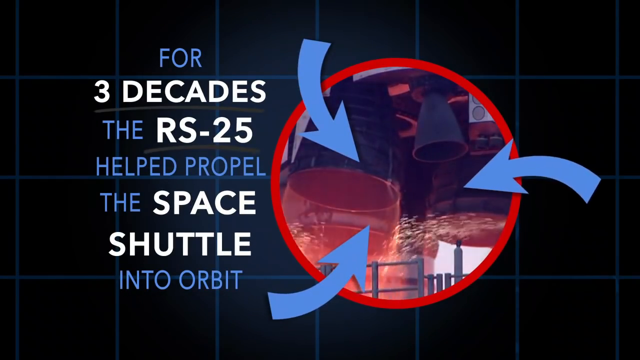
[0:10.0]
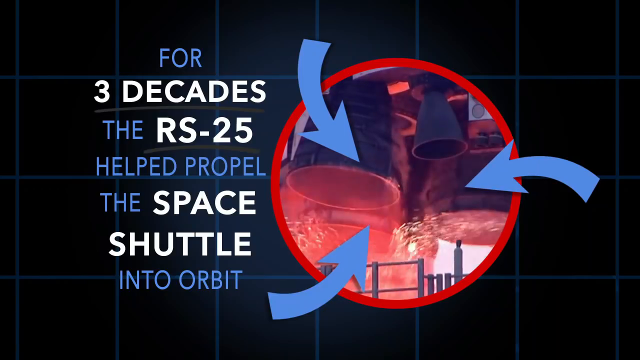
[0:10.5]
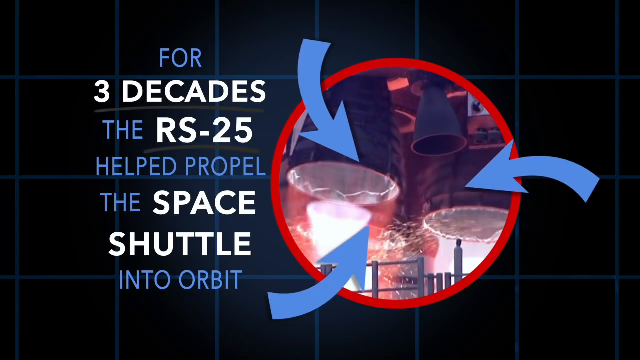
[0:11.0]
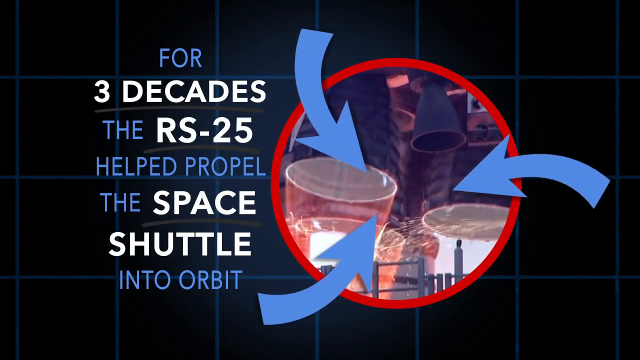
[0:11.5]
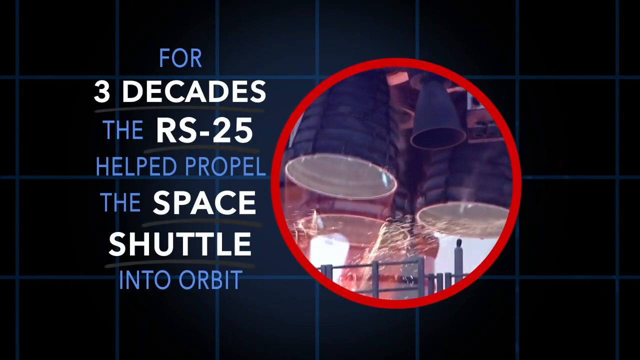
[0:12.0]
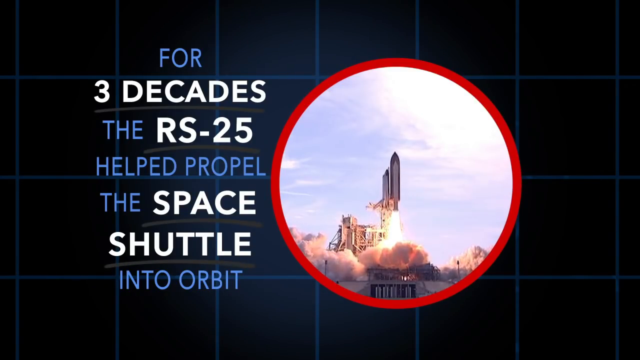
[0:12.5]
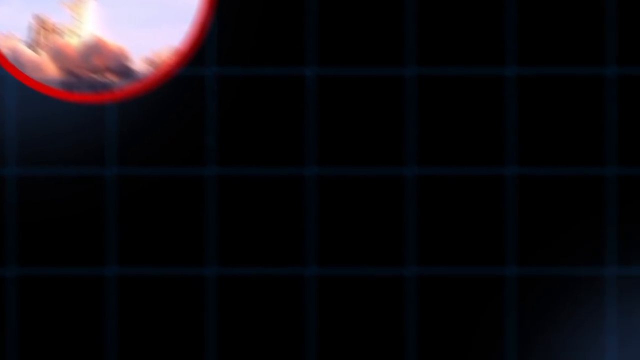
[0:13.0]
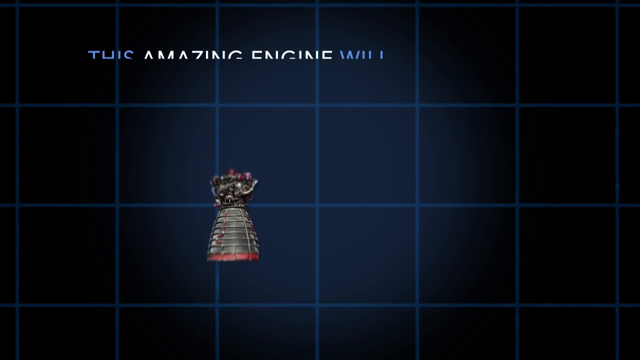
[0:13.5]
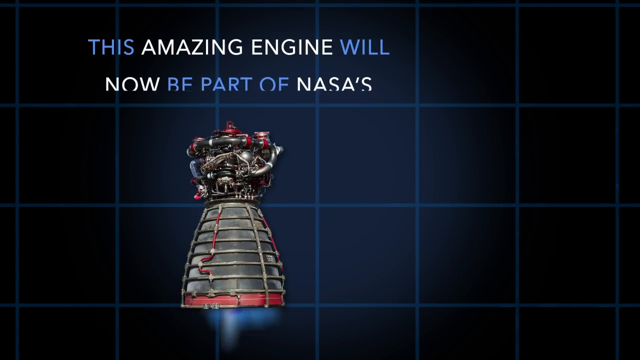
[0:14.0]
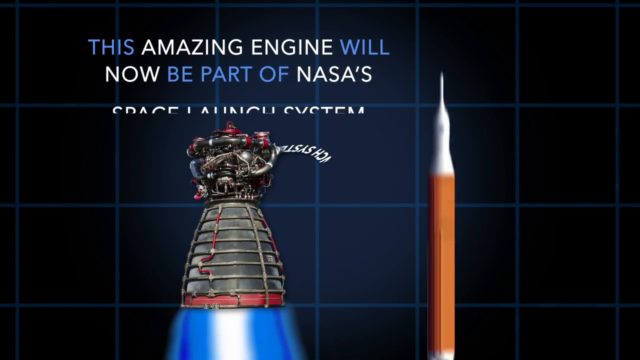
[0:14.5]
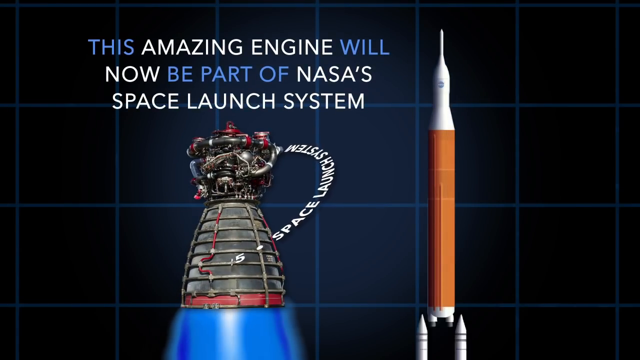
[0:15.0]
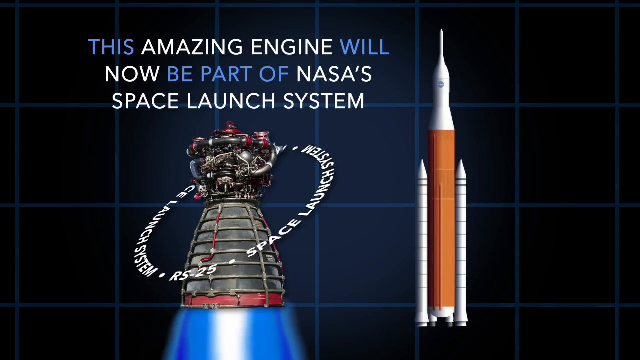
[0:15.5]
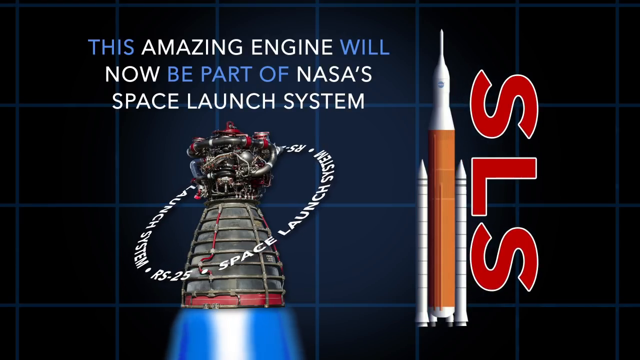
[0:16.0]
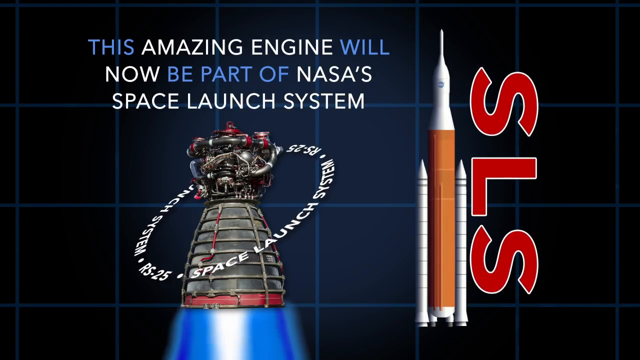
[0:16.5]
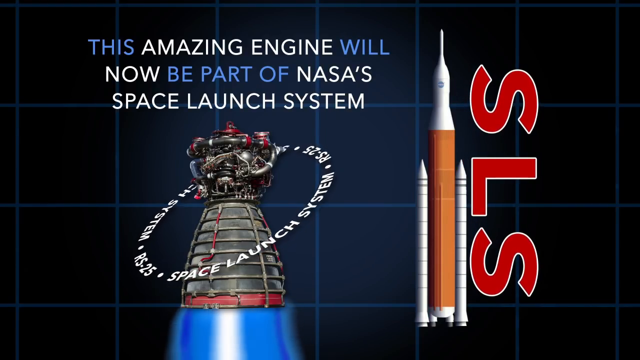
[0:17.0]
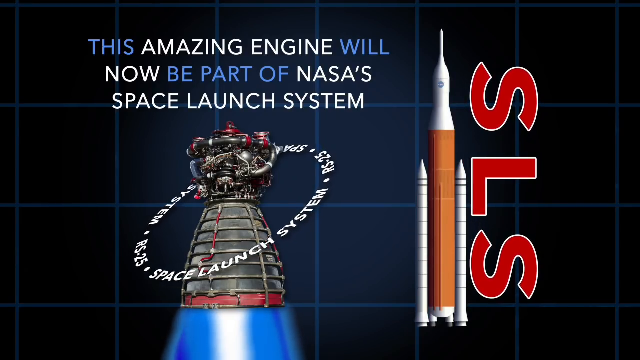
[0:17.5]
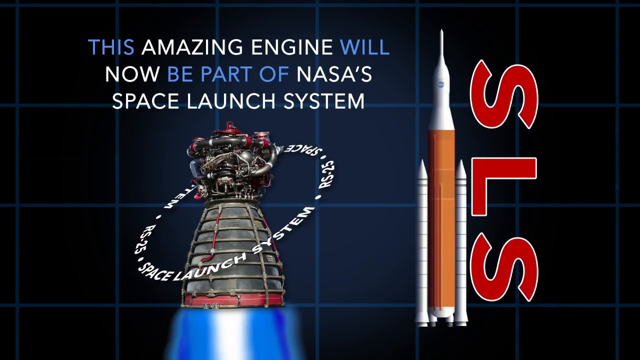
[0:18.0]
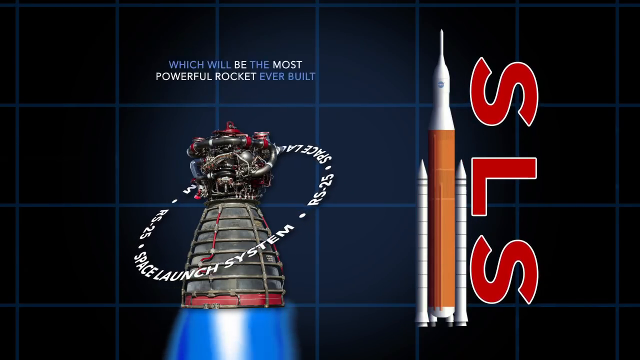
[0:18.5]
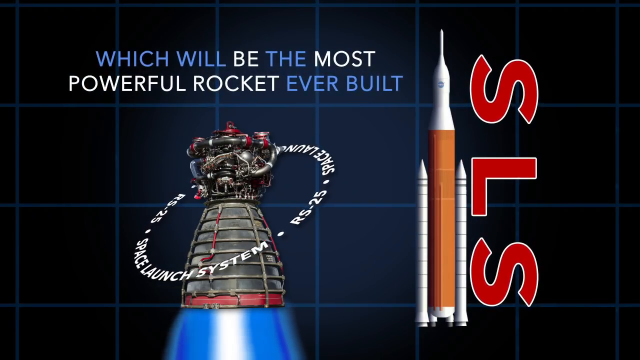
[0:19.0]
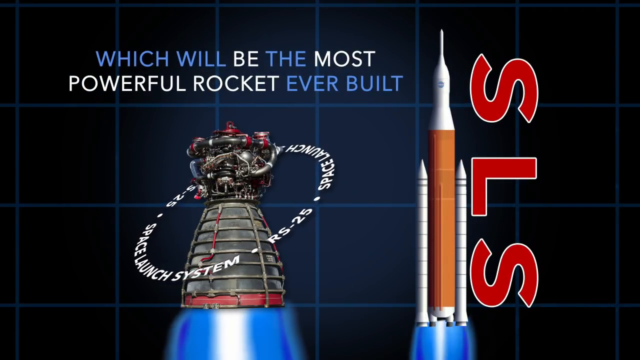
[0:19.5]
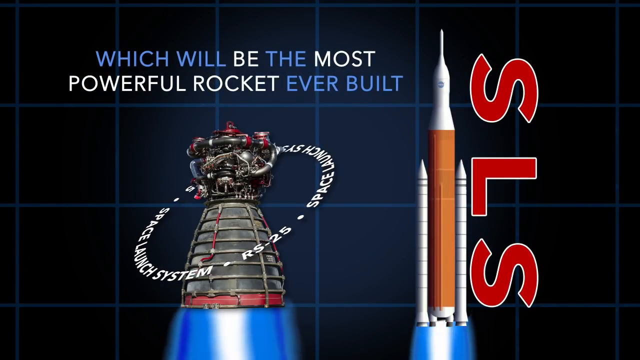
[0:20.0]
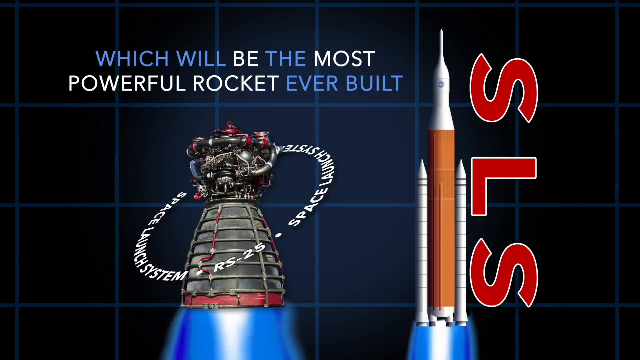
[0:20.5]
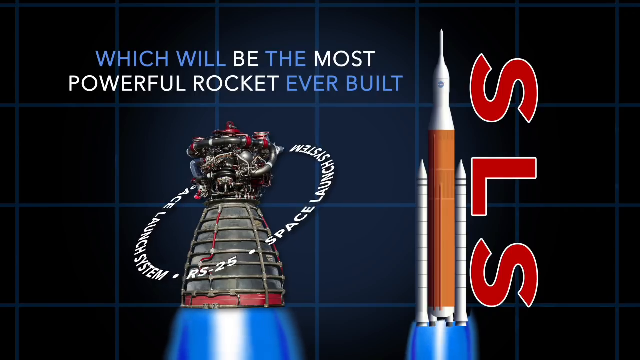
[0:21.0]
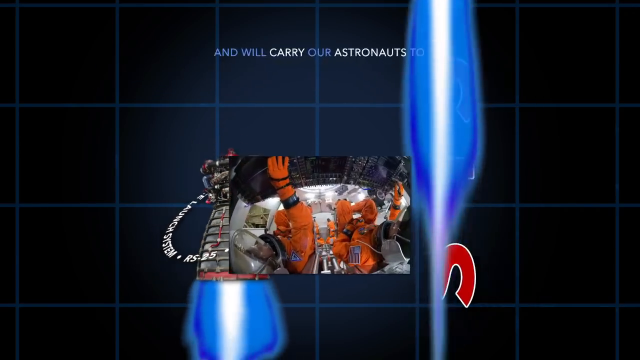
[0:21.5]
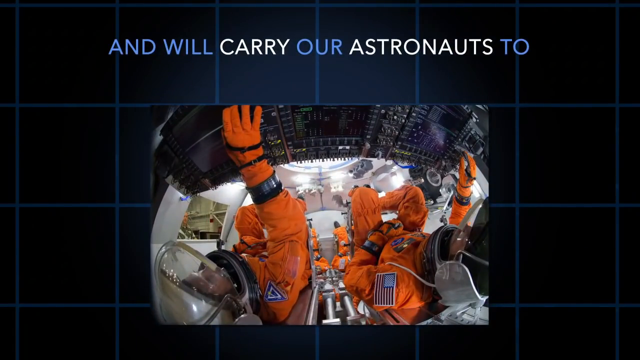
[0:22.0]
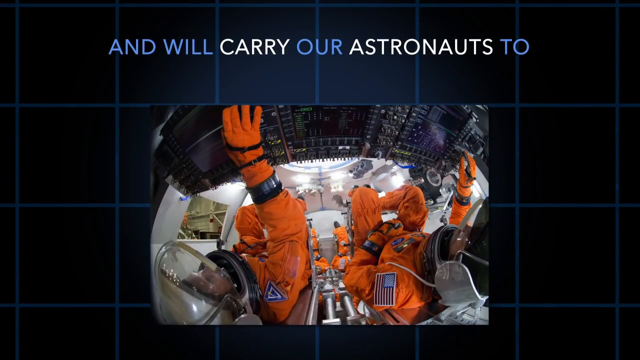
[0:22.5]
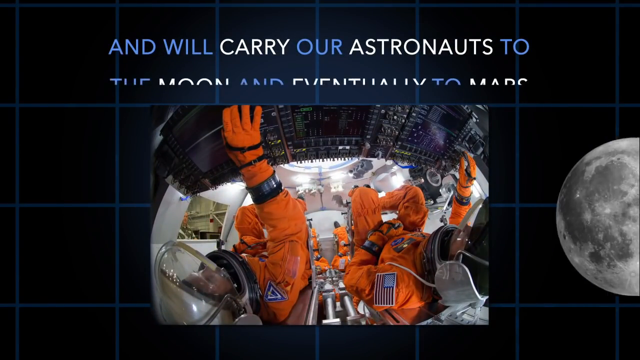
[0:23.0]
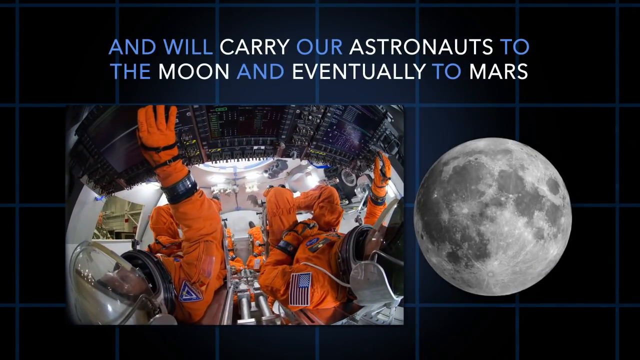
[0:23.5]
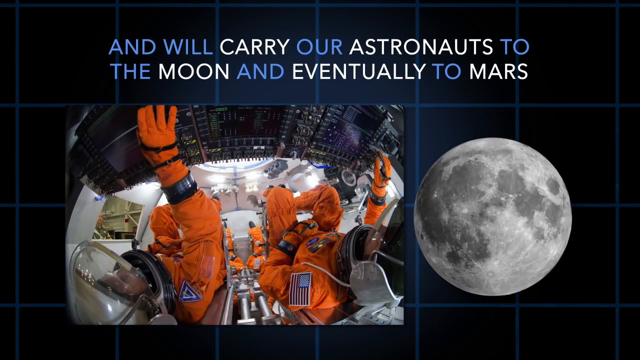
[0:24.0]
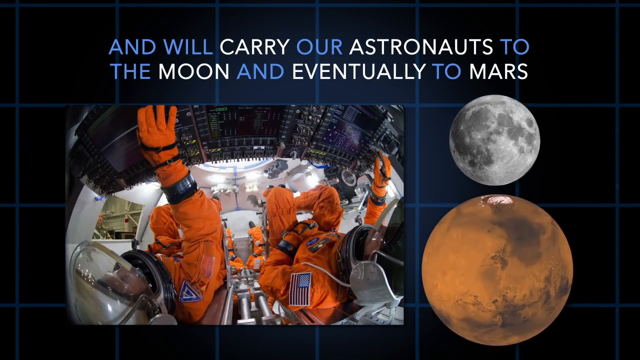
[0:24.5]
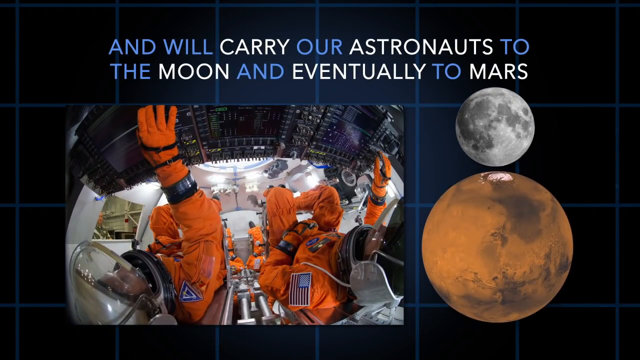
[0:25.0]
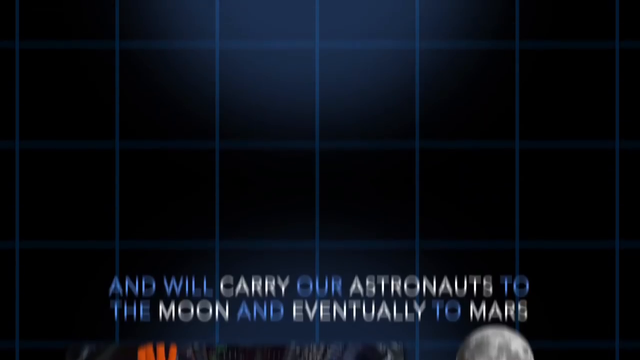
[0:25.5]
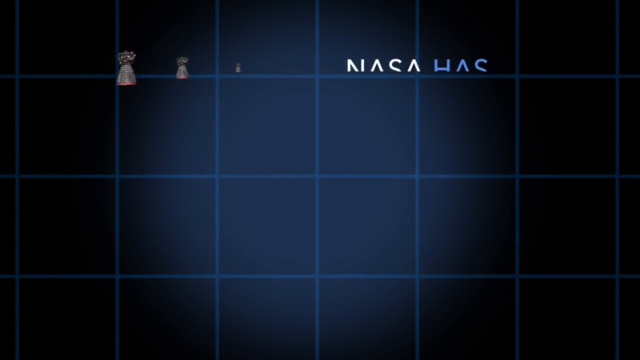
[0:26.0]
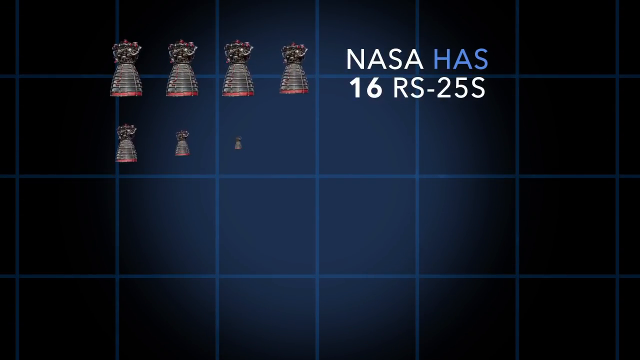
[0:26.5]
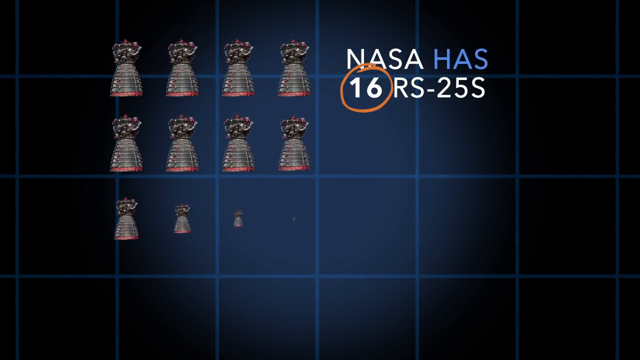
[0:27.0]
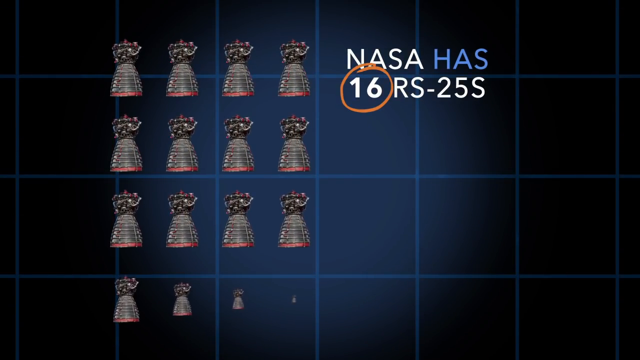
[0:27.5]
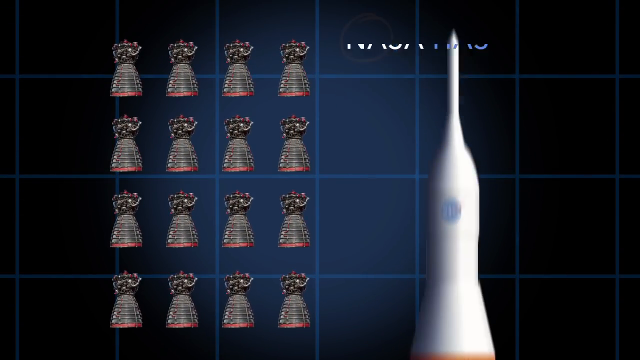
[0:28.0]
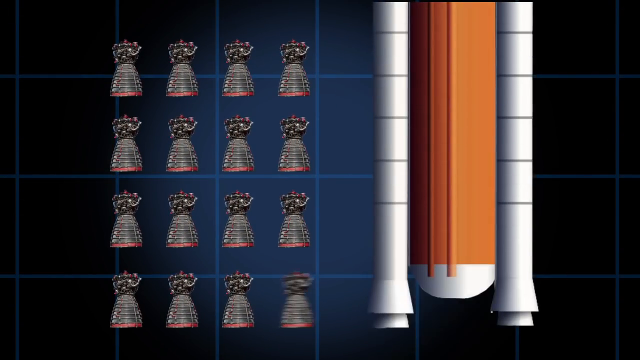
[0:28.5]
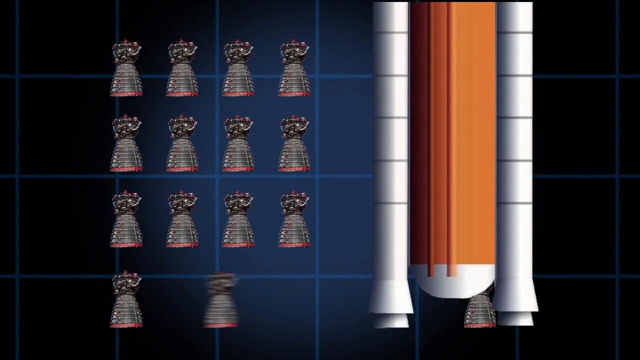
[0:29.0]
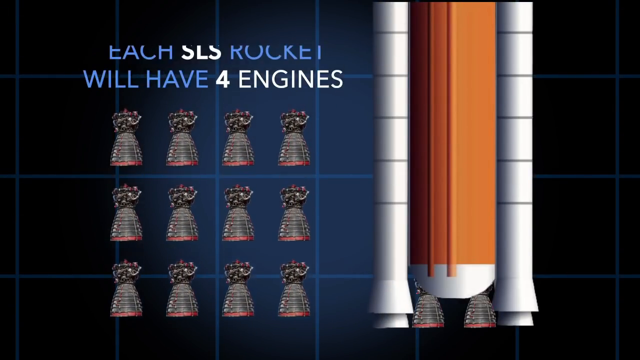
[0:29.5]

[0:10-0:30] A grid made of lines that are kind of dark blue covers a dark blue and black background. In front of it, white and blue text on the left reads "for three decades, the RS-25 helped propel the space shuttle into orbit." To the right of the text is a red circle with three arrows pointing in. Three engines fire up, and then the space shuttle lifts off from the ground. The scene changes to white and blue text in the top left reading "this amazing engine will now be part of NASA's Space Launch System." Below the text is an engine, with white text circling it clockwise that reads "RS-25 Space Launch System." To the right is a tall orange and white rocket with two smaller white boosters, one on each side. To the right of that, vertical letters read "SLS."